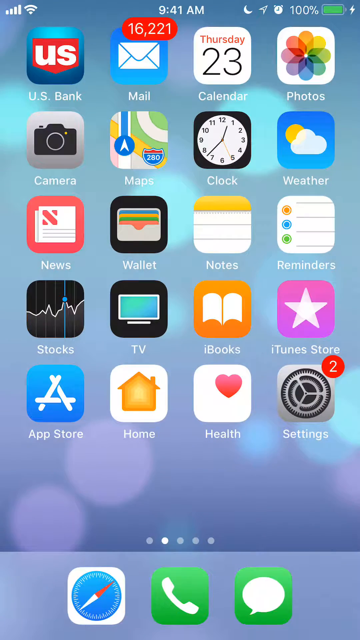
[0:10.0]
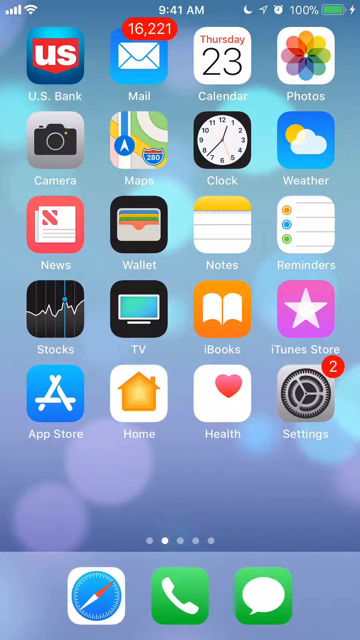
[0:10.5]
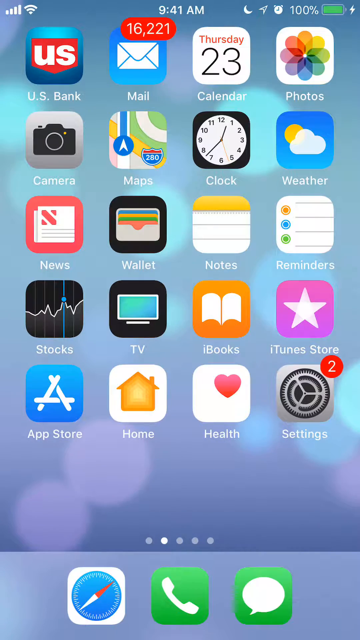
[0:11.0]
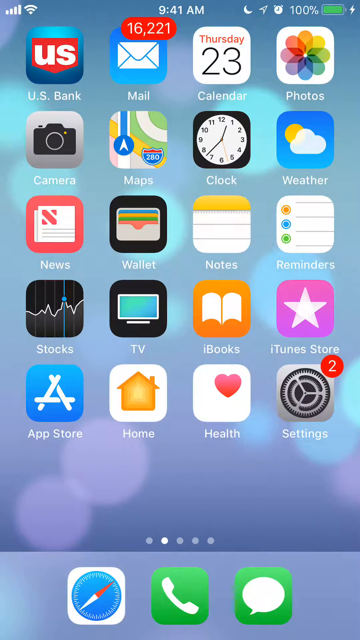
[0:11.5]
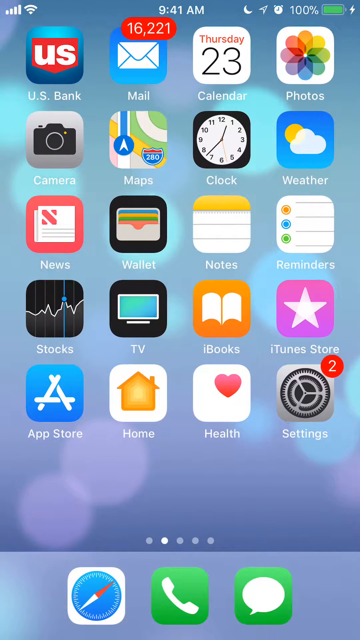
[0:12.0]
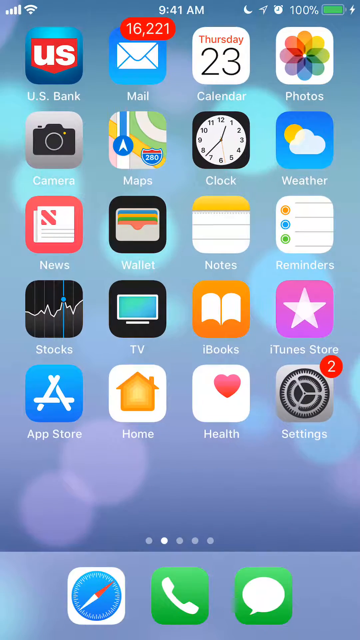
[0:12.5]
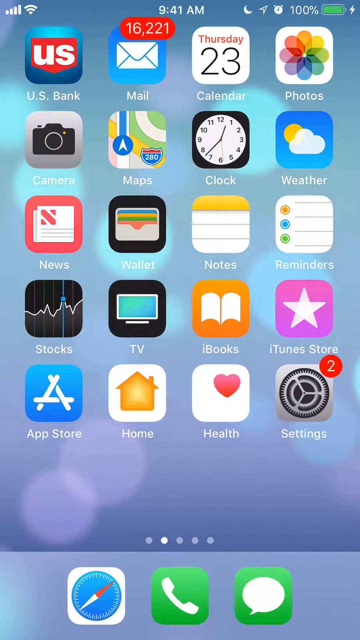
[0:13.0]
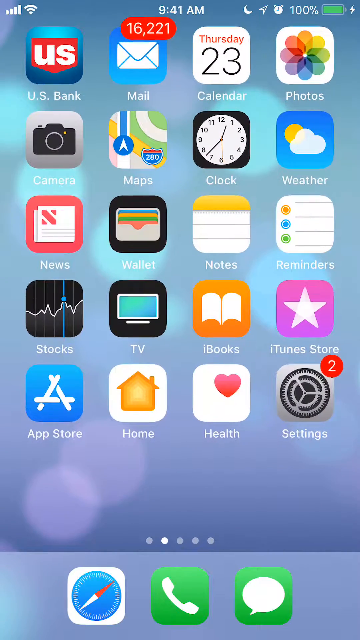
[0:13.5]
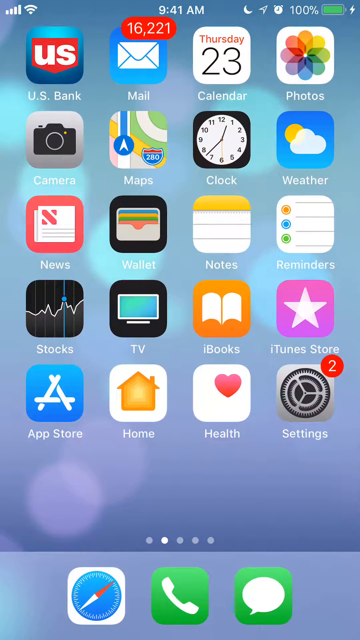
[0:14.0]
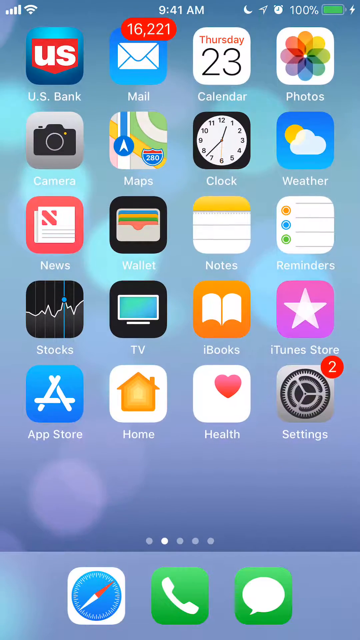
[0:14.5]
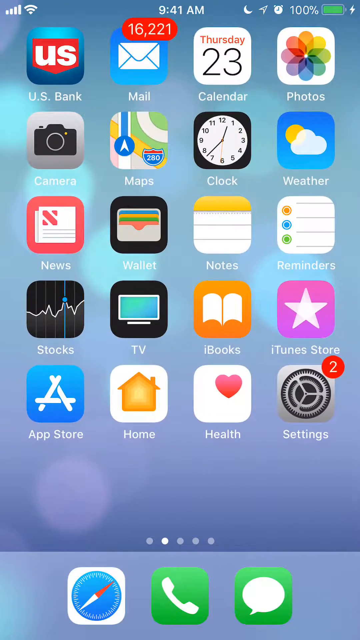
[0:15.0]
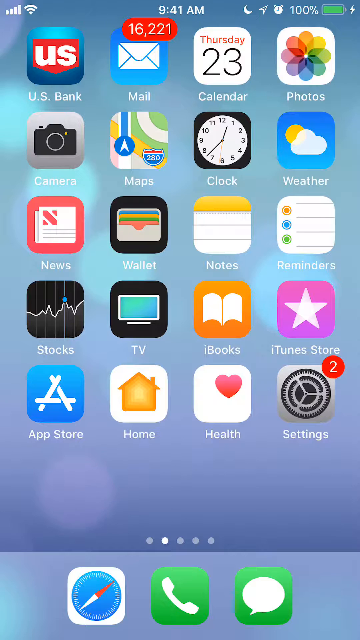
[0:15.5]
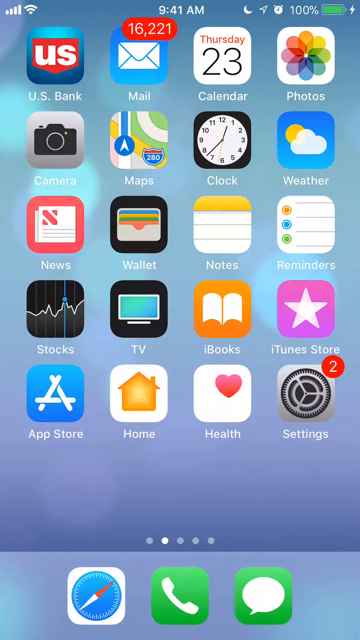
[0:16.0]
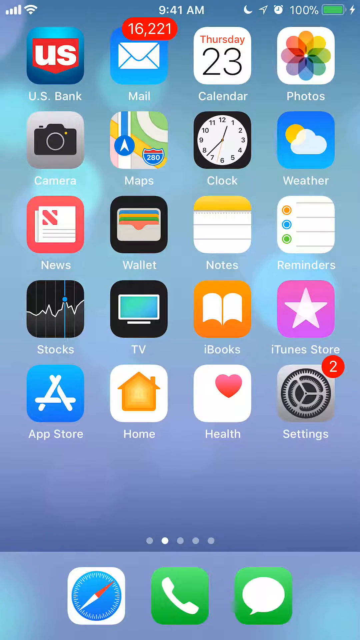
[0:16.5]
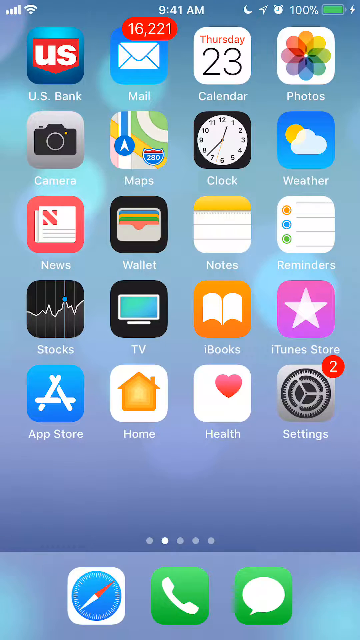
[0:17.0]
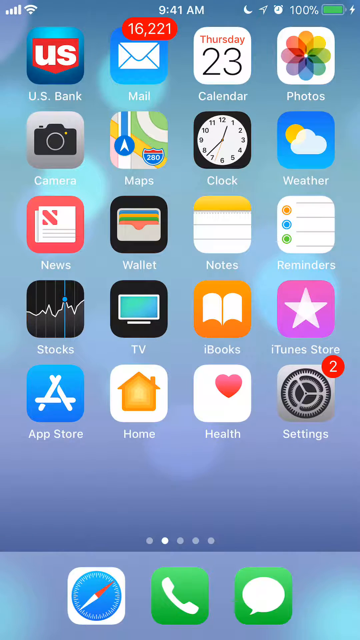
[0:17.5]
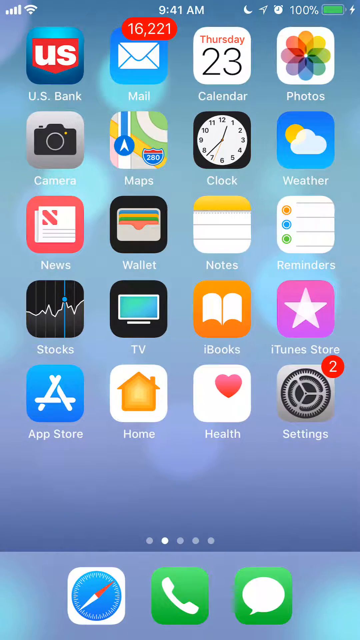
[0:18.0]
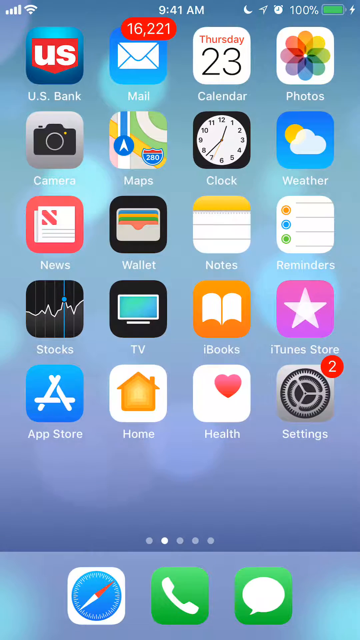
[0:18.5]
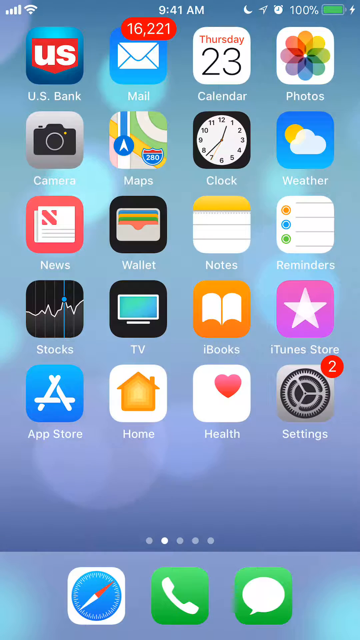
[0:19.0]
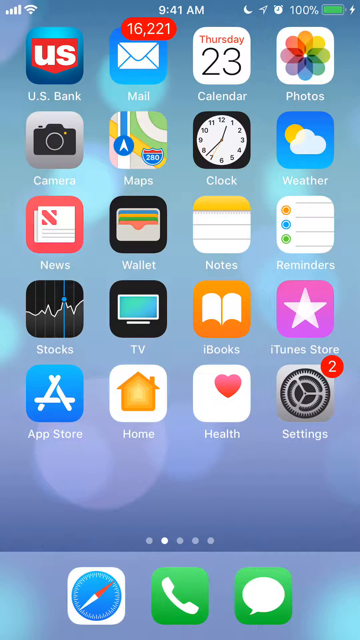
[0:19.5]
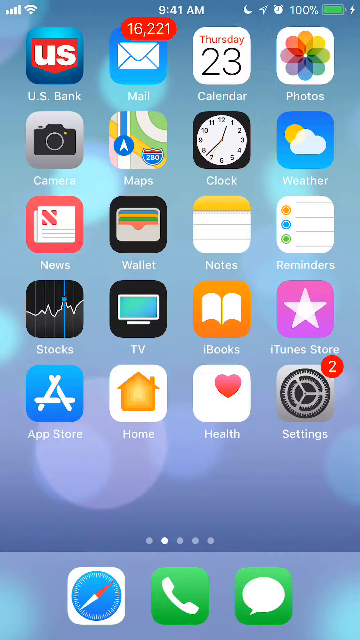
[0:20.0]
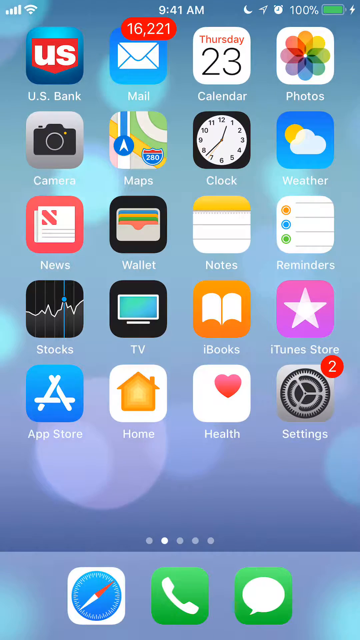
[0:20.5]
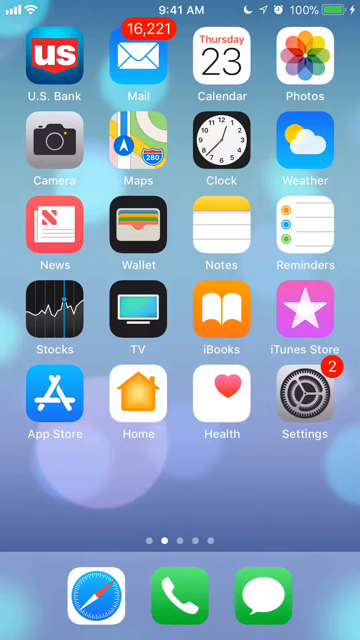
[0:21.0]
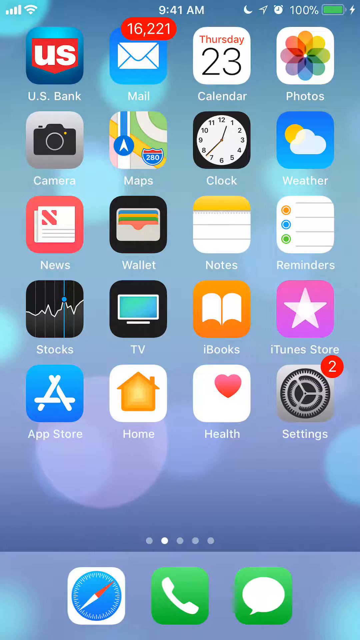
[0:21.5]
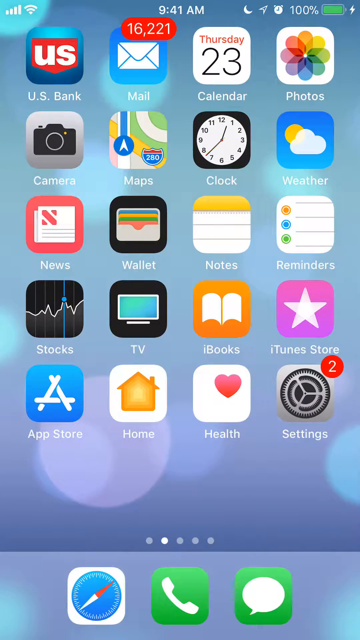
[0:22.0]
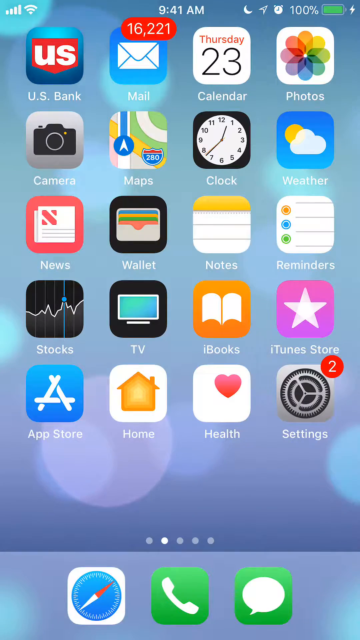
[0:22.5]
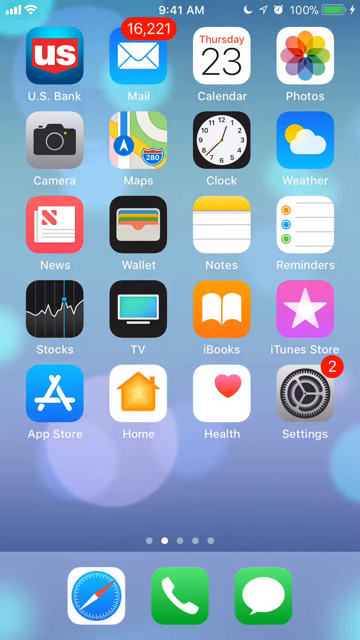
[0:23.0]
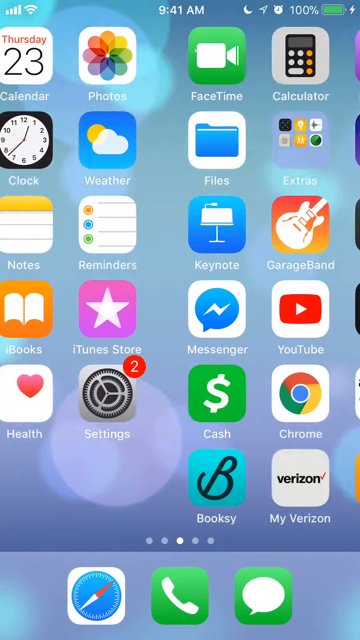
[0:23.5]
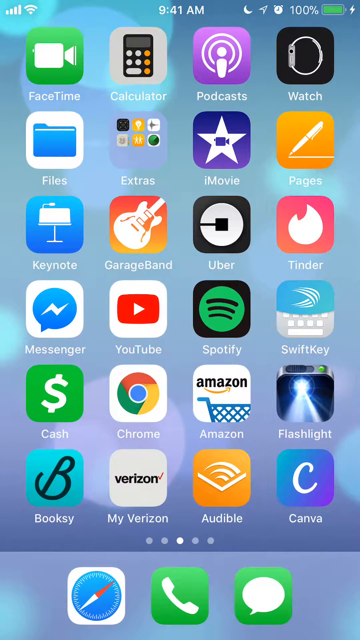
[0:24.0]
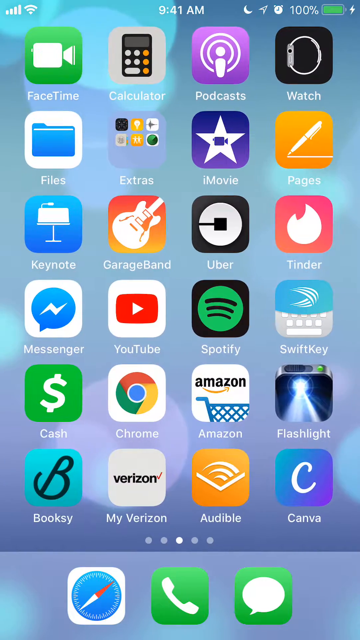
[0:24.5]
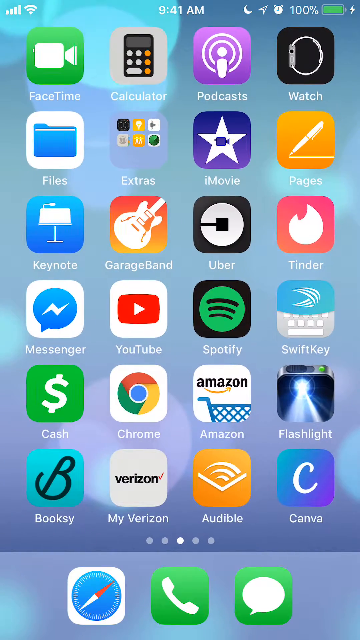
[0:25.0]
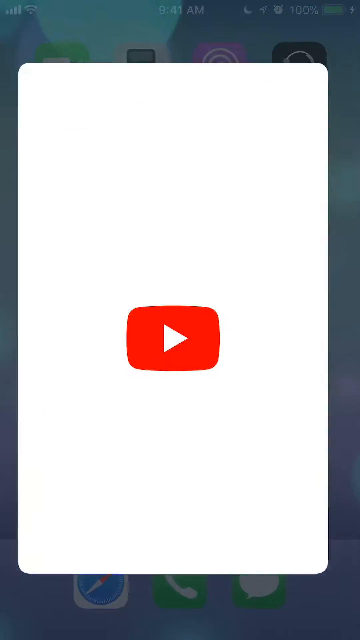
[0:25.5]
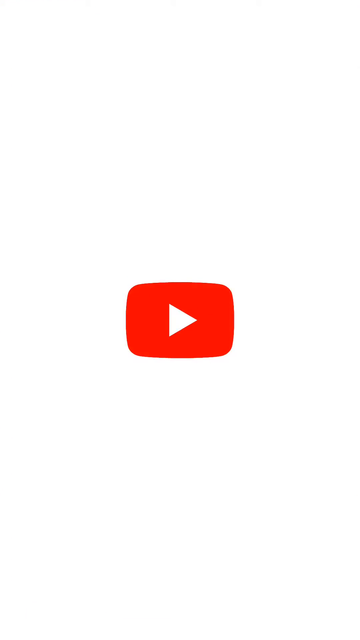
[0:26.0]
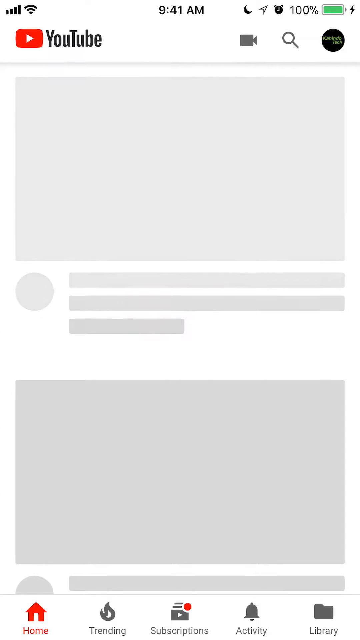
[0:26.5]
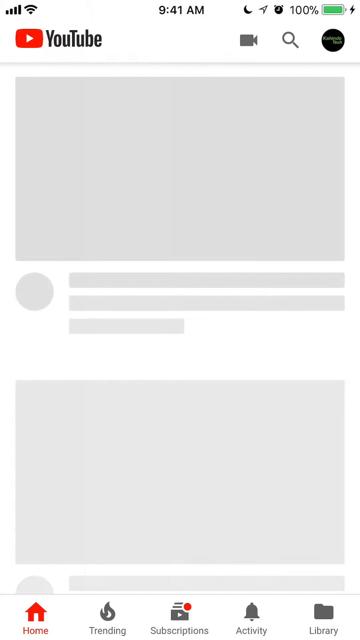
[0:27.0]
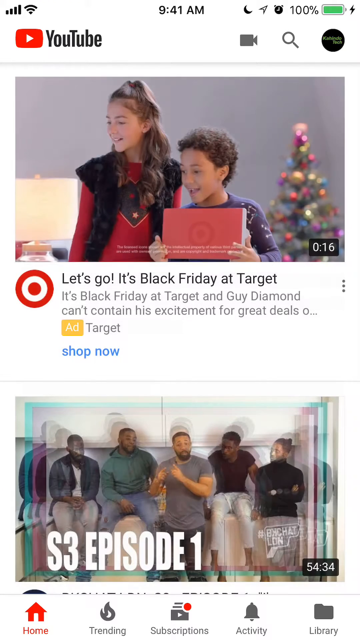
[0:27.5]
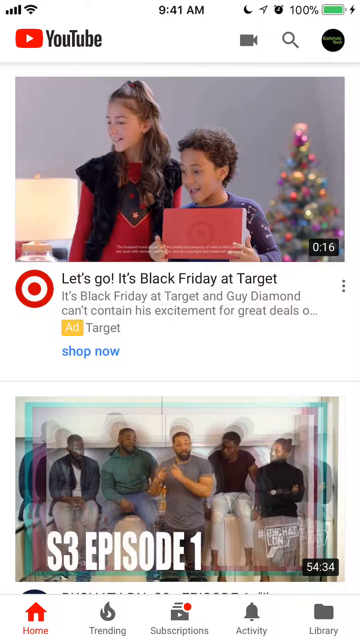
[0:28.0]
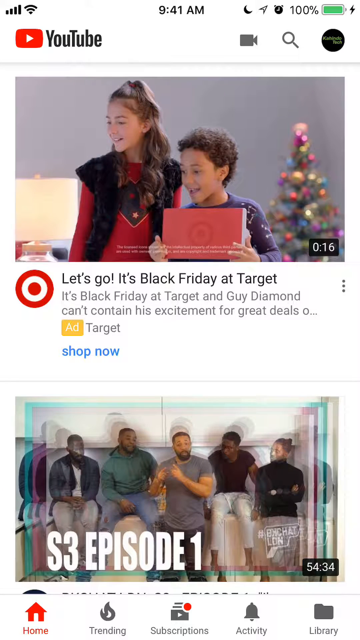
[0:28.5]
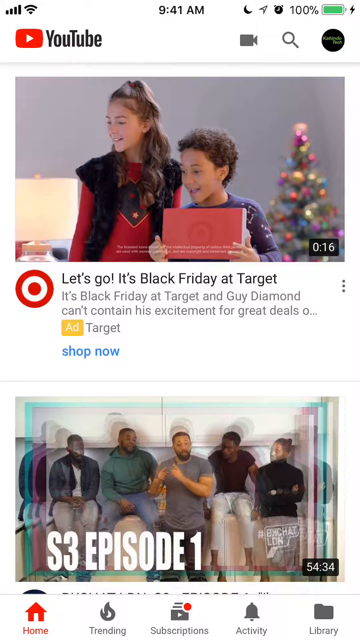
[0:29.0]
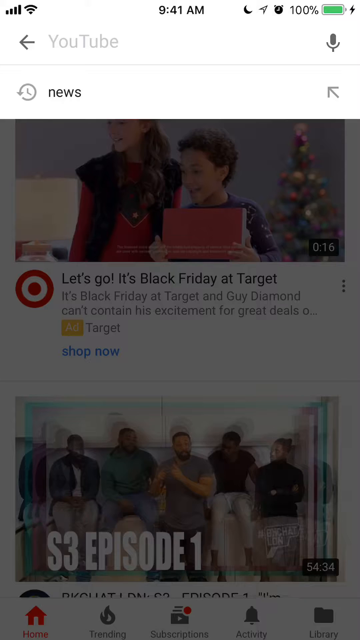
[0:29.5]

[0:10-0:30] The iPhone icons all move slightly due to the parallax effect of iOS 7. The screen moves on to the next page of apps, which has FaceTime, Calculator, Podcast, Watch, Files, Extras, iMovie, Pages, Keynote, GarageBand, Uber, Tinder, Messenger, YouTube, Spotify, SwiftKey, Cash, Chrome, Amazon, Flashlight, Booksee, My Verizon, Audible and Canva. The YouTube app is opened and loads for a little while, then shows an advert for Target and a season 3 episode 1 video. Several men appear in the preview, all apparently African American: the man in the middle wears a gray top, the one to his right wears a green hoodie, the man to the left of him wears a black top, the man on the far right wears black, and the man on the far left wears a black jacket and a white top. It is unclear what the season is, as the caption is not in view. The keyboard then opens in a dark colour.